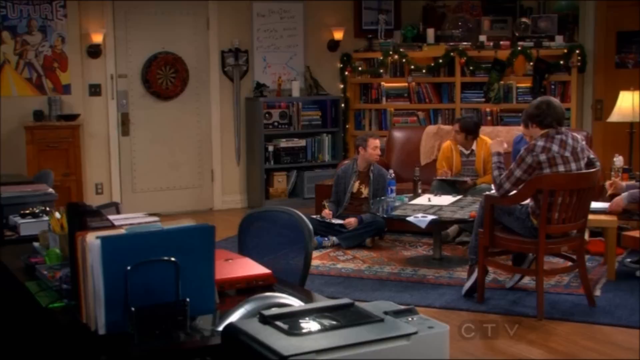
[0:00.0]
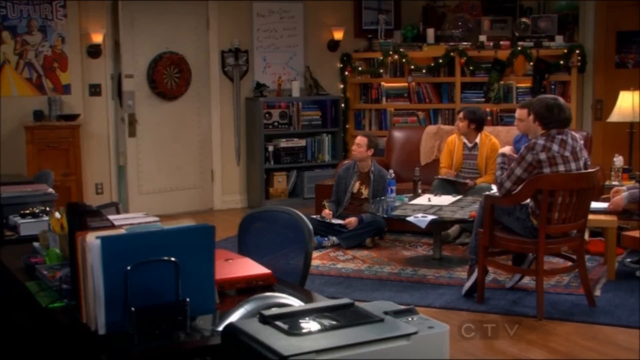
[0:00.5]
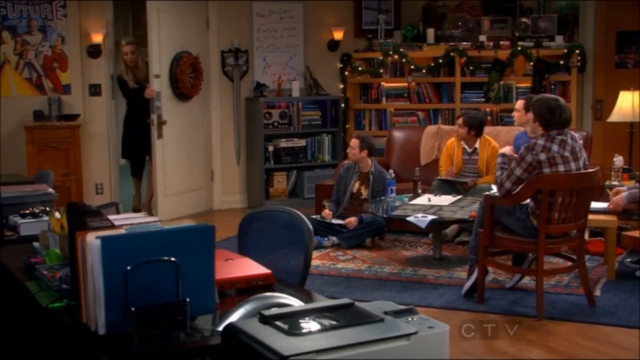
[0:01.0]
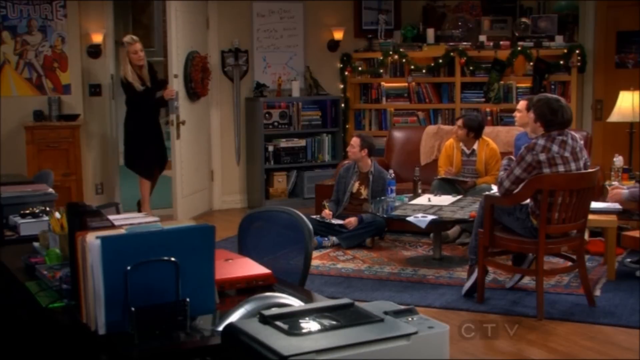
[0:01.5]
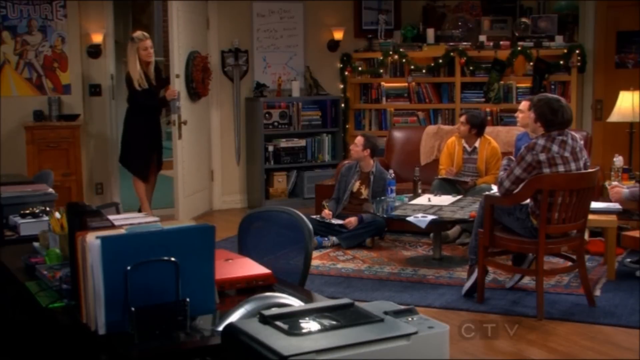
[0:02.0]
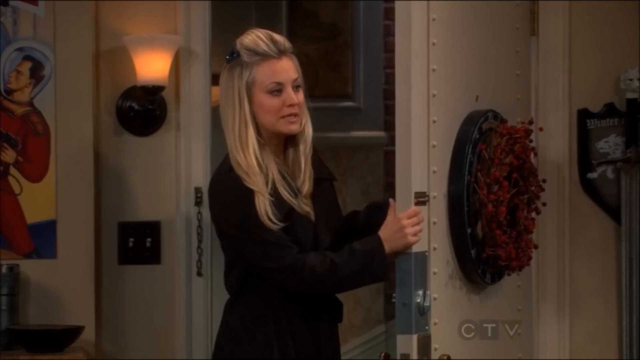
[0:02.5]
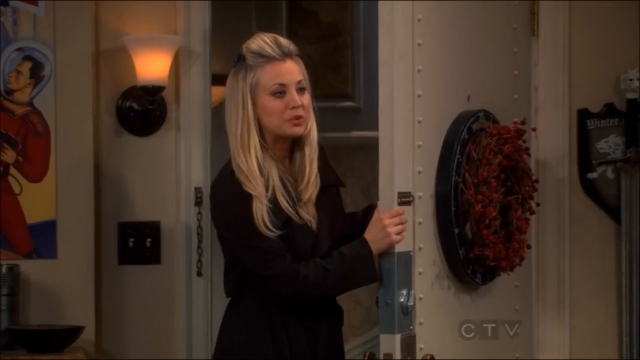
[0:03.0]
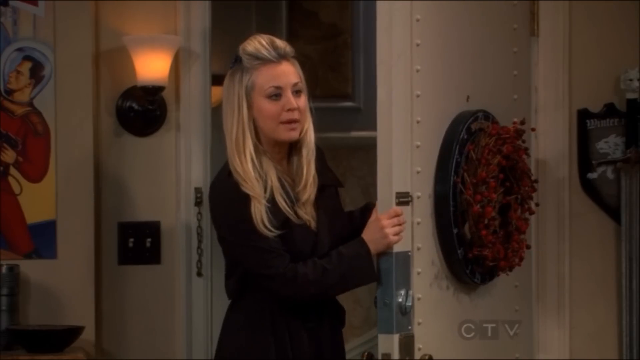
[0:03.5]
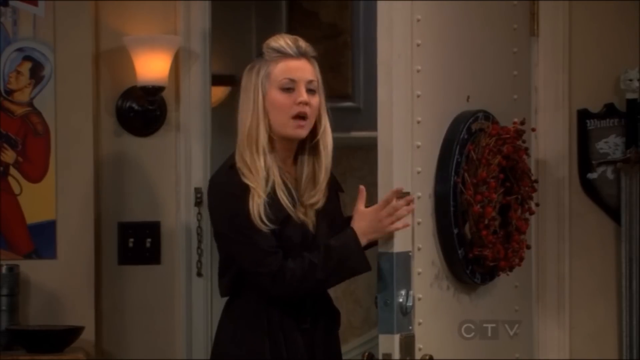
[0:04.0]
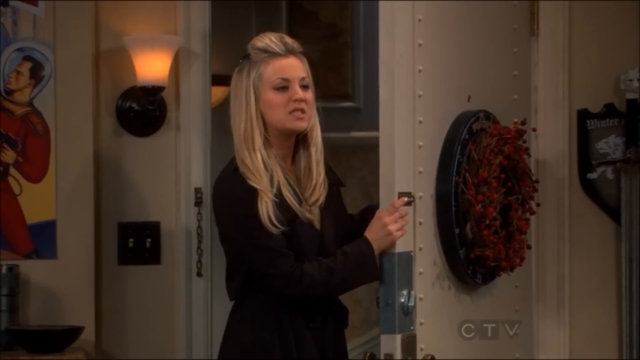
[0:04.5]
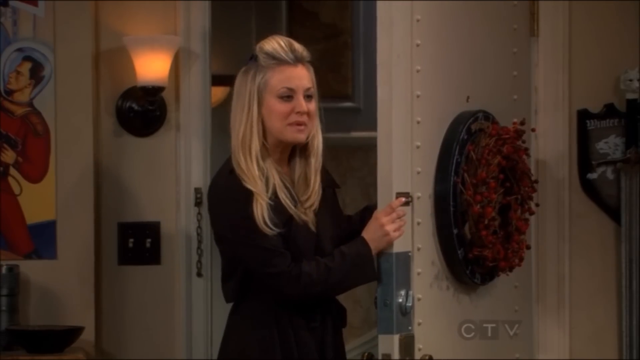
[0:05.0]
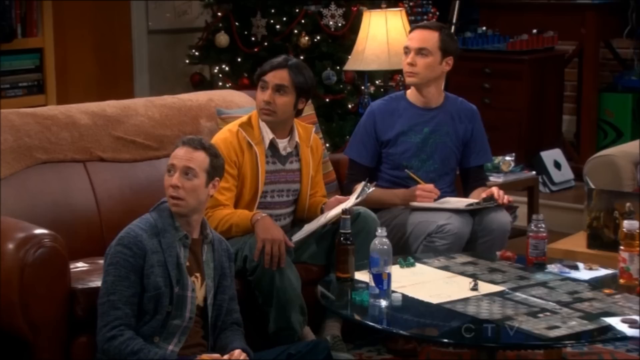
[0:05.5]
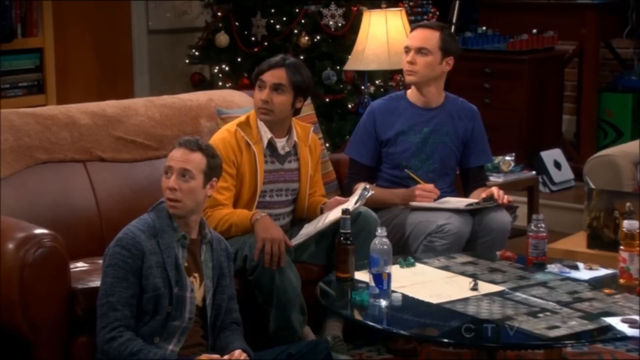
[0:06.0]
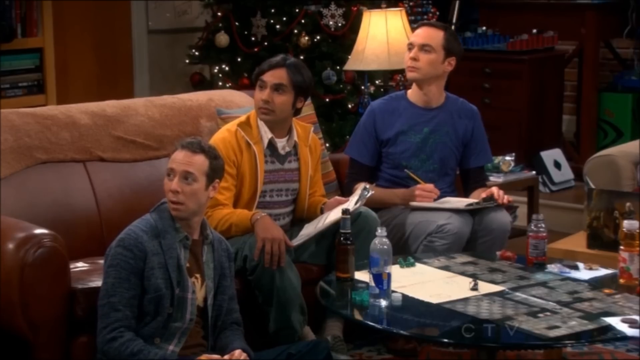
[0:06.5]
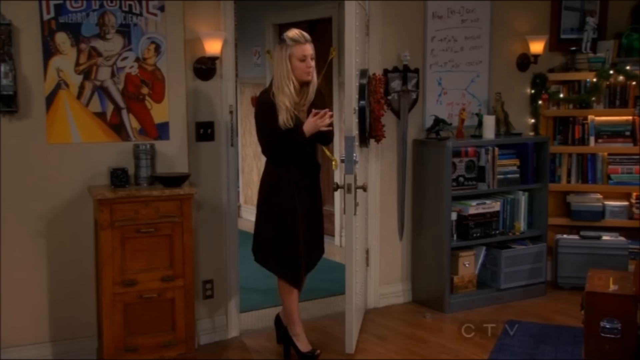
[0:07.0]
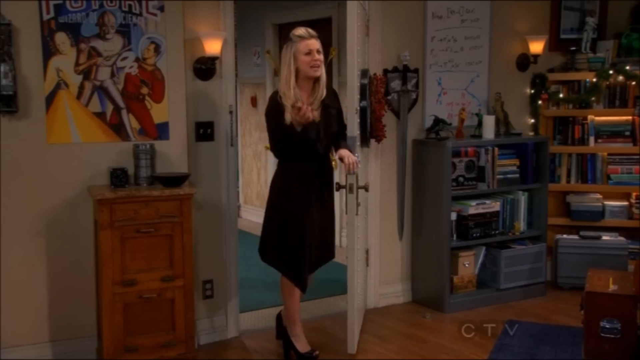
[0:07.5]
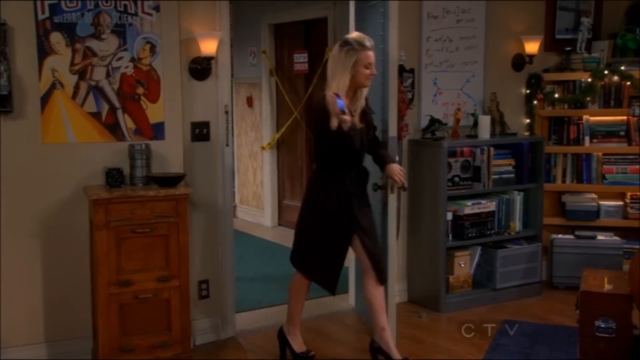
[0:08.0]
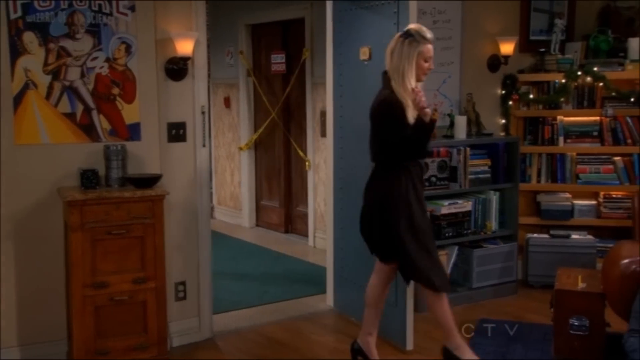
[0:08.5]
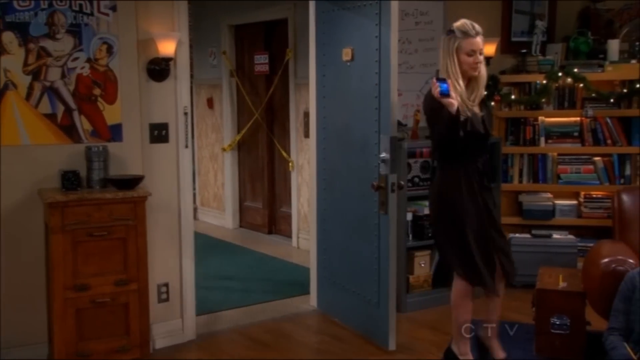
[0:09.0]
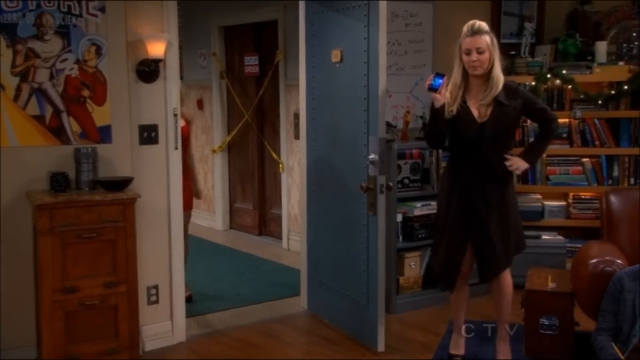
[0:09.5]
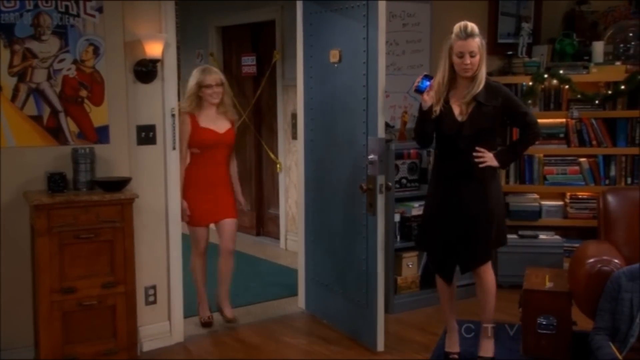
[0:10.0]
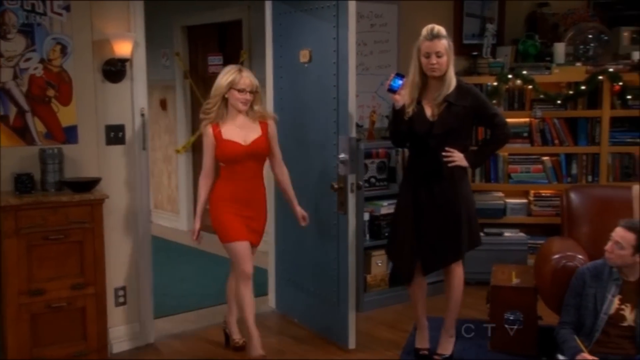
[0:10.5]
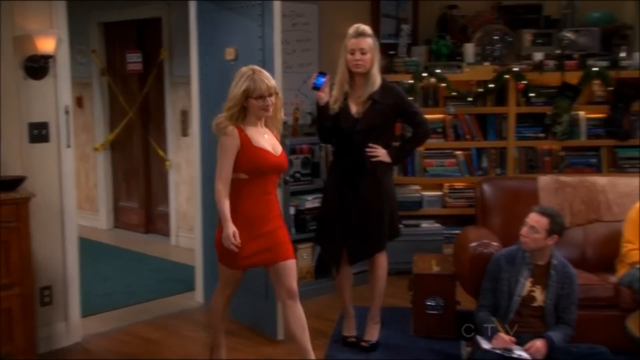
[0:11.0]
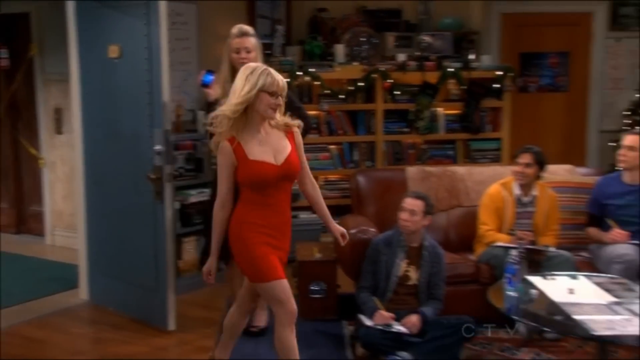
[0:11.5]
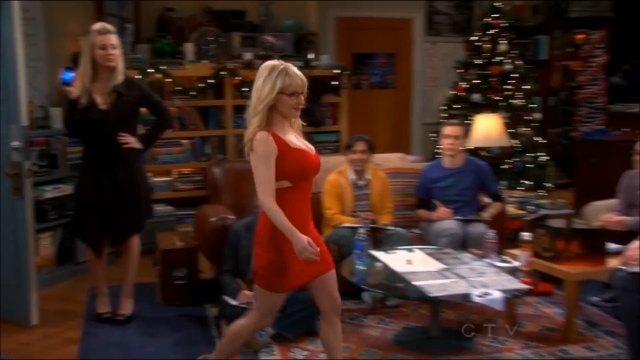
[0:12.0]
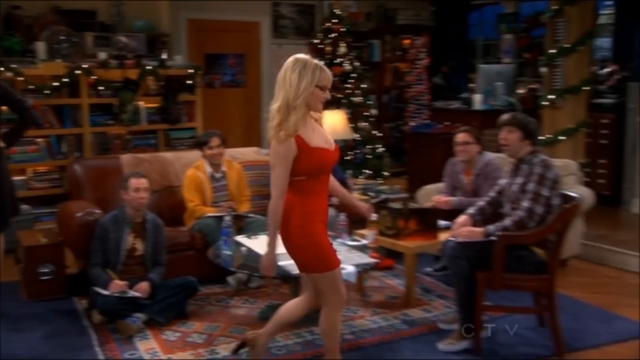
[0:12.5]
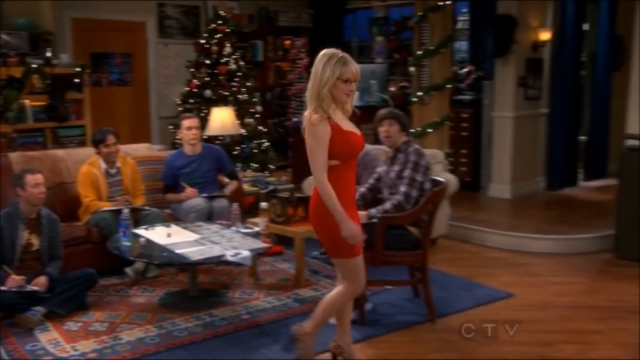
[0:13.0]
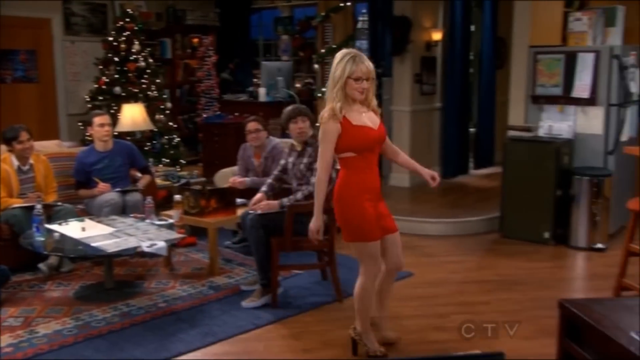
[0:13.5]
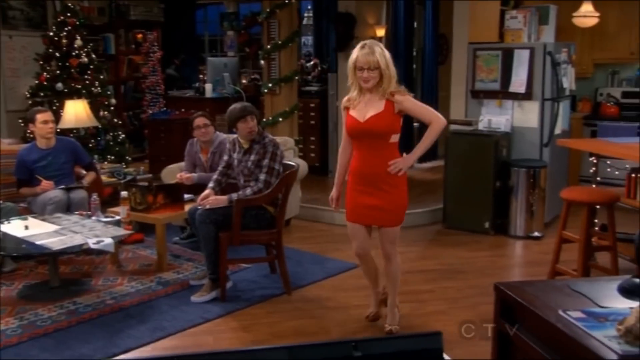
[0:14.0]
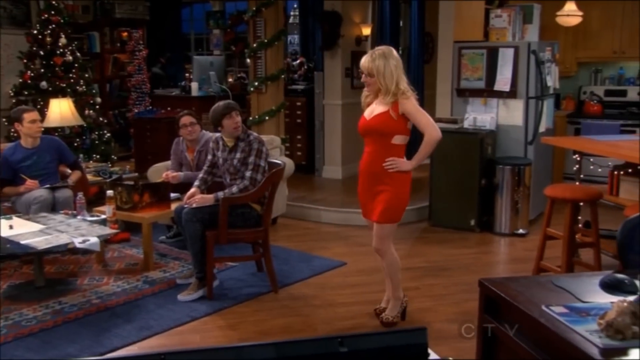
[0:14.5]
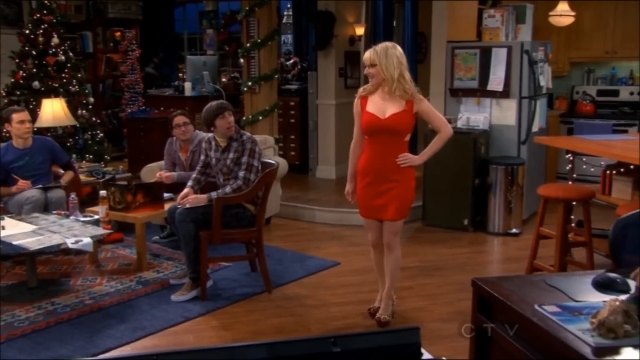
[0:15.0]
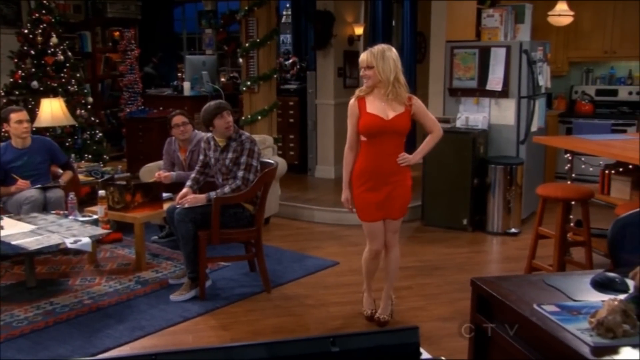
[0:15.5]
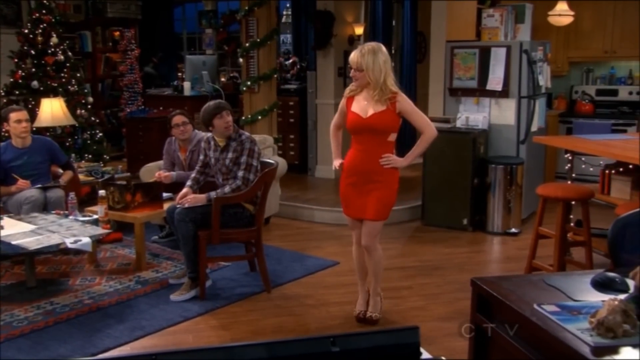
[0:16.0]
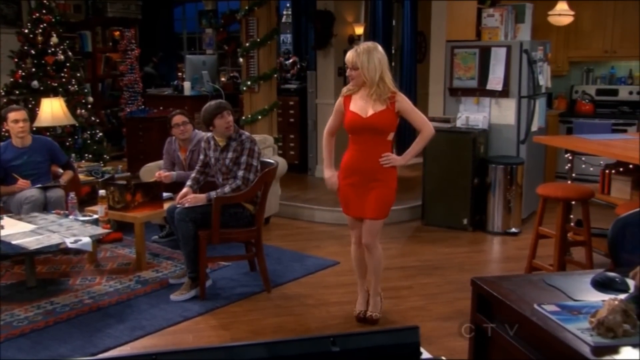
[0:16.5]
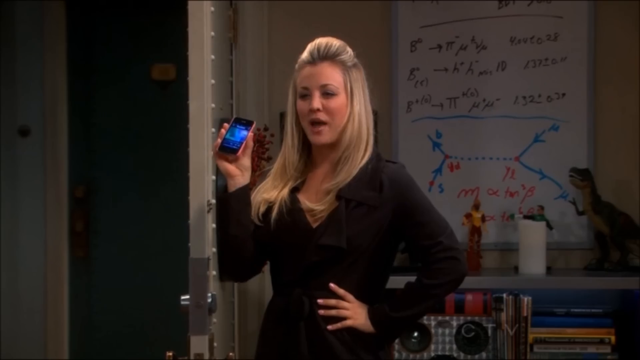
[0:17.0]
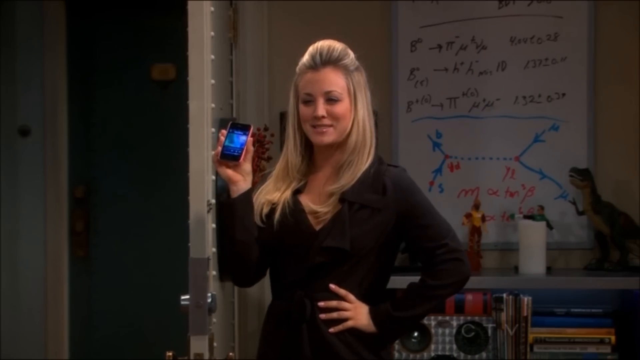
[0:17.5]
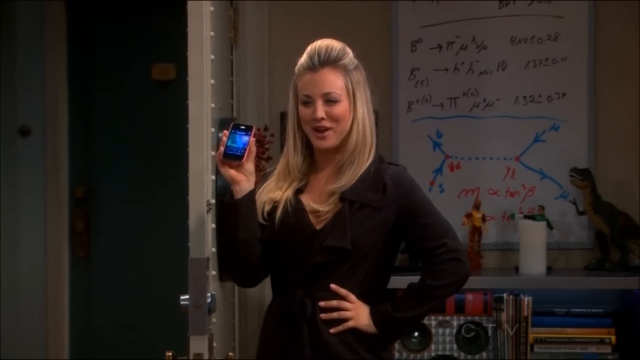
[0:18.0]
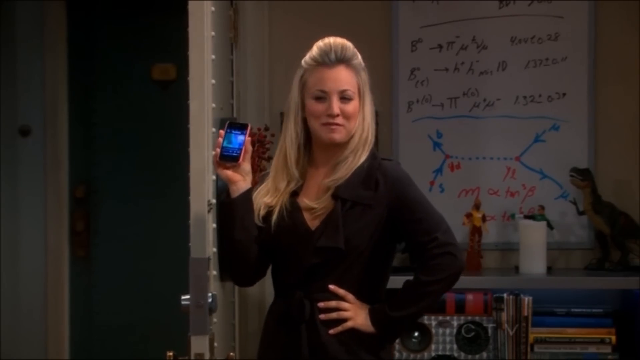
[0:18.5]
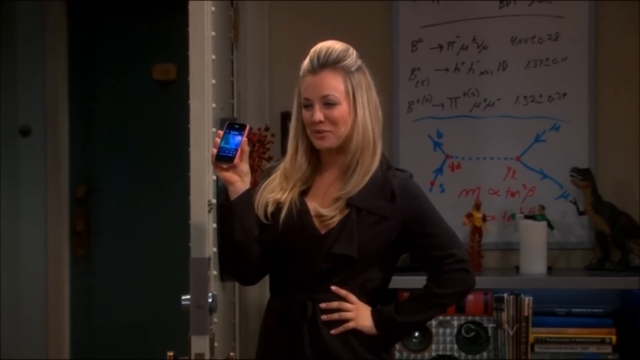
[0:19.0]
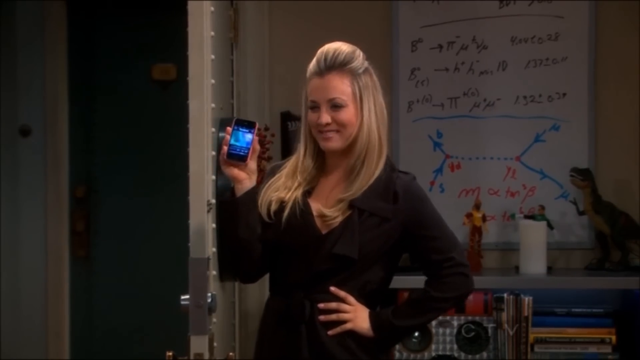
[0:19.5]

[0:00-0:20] A living room has three people sitting in it. On the left is a white door with a dartboard on the back of it, and a giant sword is next to the door. In the background is a bookcase filled with books, with a wreath of lights going up and down around the top of it, and there is a whiteboard with writing on it. At the front of the screen is a desk with folders on it. A man sits with his back to the camera in a wooden chair, wearing a checked shirt. On the couch is a man of Asian descent in an orange jacket with dark black hair, looking to the man on the left, who sits on the floor with his legs crossed, wearing a blue top, with short curly hair, writing something on a tablet. From behind the man in the chair, the head of another man in a blue top is visible. They all turn their heads to the left of the screen and look as the door opens, revealing a woman with blonde hair in a long black dress in the doorway. The camera focuses on her in close-up; to her left is a light with a light switch underneath it. She has long blonde hair and her right hand rests on the door, on the back of which is a dartboard with numerous darts stuck in it. She addresses the four men in the room. The shot cuts to three of the men looking at the woman in the doorway. The man on the far side of the orange couch wears a blue t-shirt over a long dark blue long-sleeved top and grey pants; he holds a pencil in his right hand and a book in his left hand, resting on his knee. The man next to him holds a clipboard and rests his right hand on his knee, and the man on the floor looks at the woman in the doorway. Behind the man in the blue top on the couch is a table lamp, and behind the lamp is a Christmas tree. The shot cuts to the woman looking at her phone, holding it up with her left hand while steadying herself with her left hand on the door. She opens the door fully while holding the phone and moves away from it, and behind her a woman in a short red dress walks in, with long blonde hair and glasses, strutting her stuff. In the background is an elevator shaft with two yellow warning tapes across the doorway. The woman in the red dress walks straight into the sitting room and stops in front of the kitchen; the kitchen and bar stools are to the right. To her left, the man in the wooden chair looks at her. A fifth man is now visible, sitting on a chair, leaning forward, wearing a purple hoodie, with short hair and glasses. The woman does a twirl. The shot cuts back to the blonde woman, now standing with her hand on her hip, holding her phone up with her right hand.